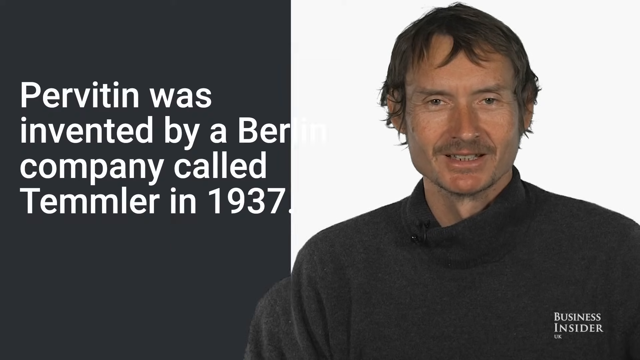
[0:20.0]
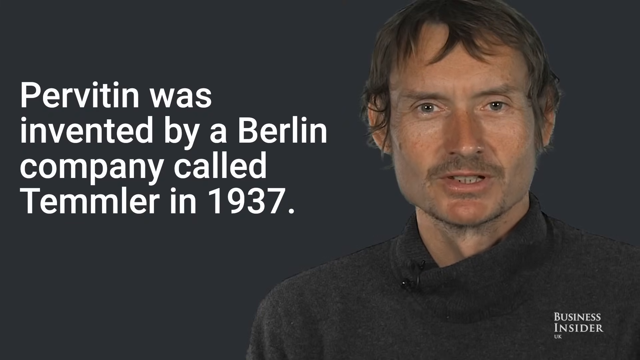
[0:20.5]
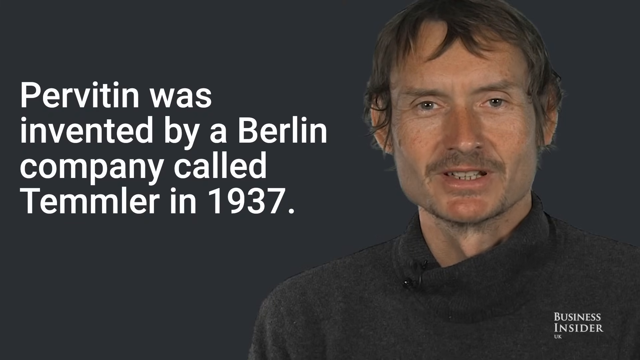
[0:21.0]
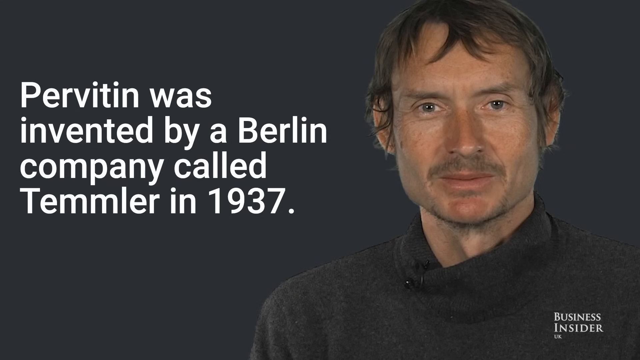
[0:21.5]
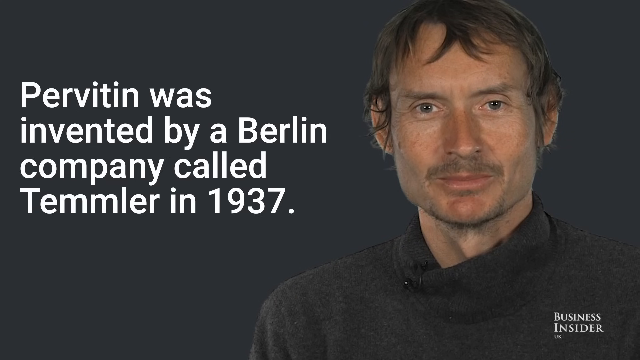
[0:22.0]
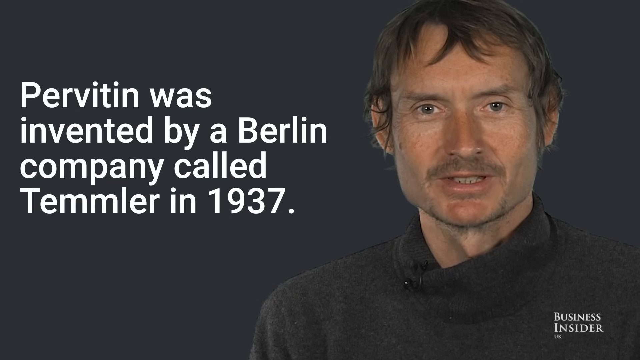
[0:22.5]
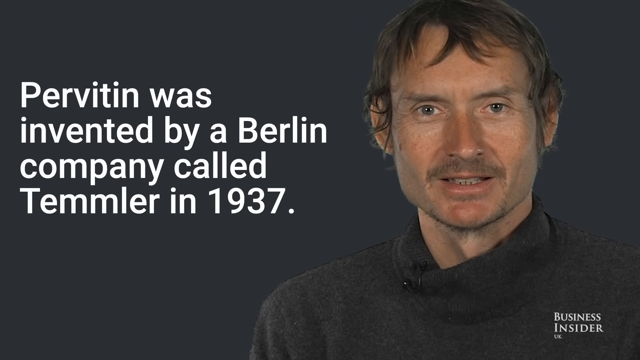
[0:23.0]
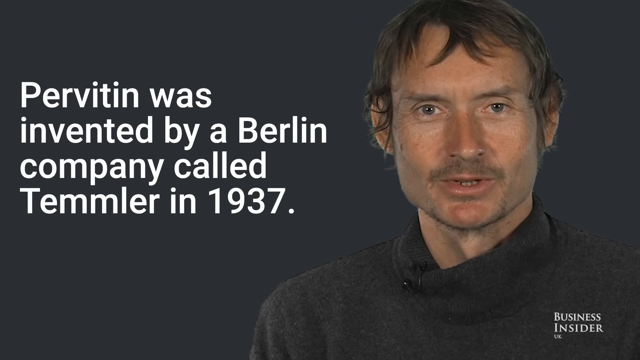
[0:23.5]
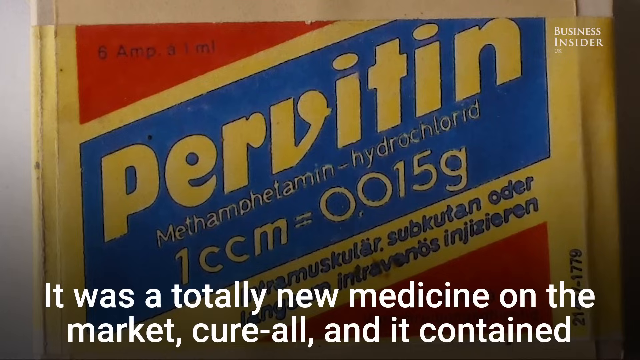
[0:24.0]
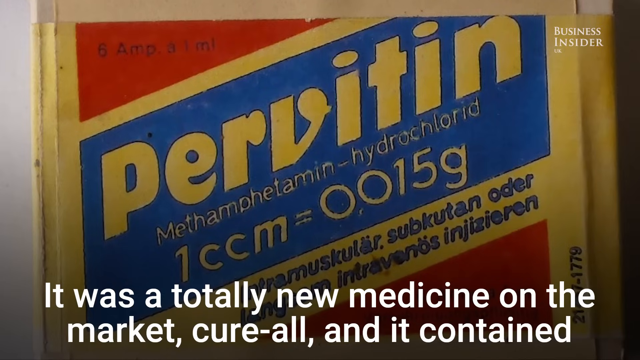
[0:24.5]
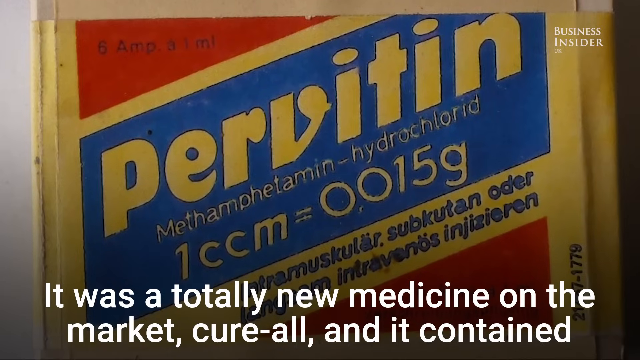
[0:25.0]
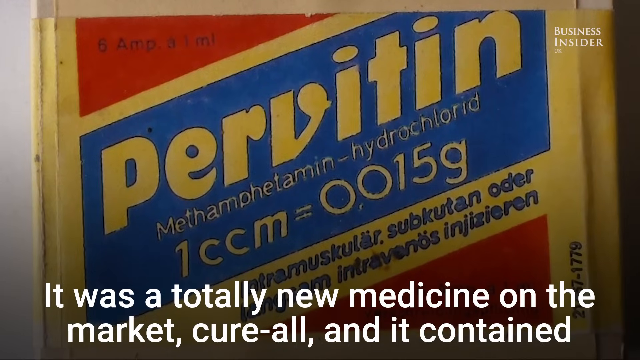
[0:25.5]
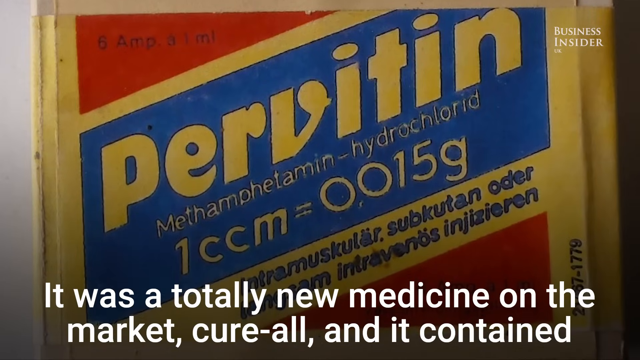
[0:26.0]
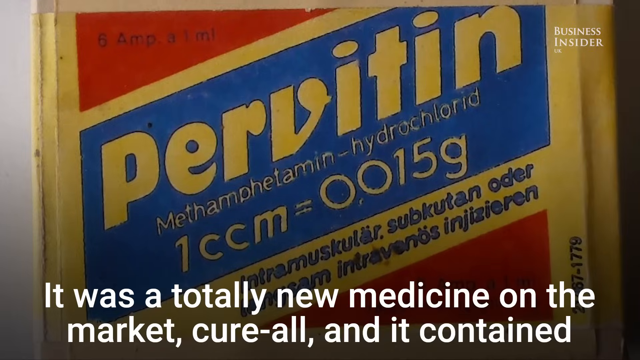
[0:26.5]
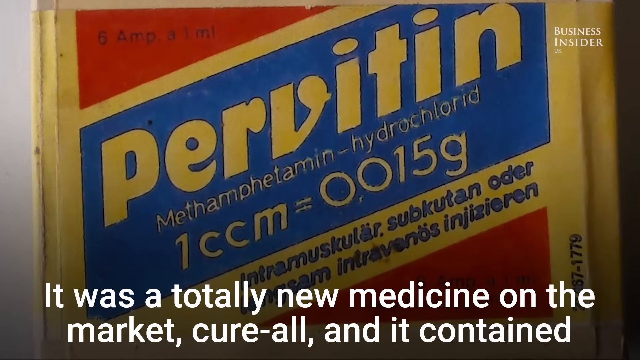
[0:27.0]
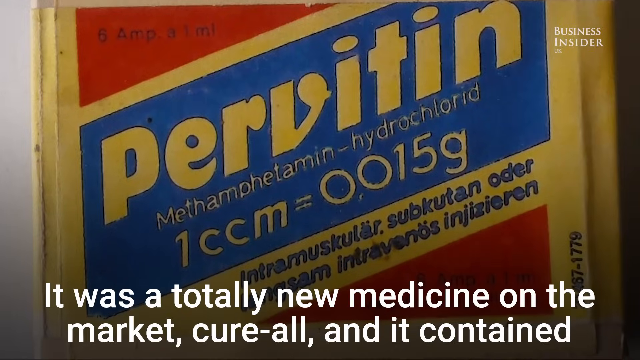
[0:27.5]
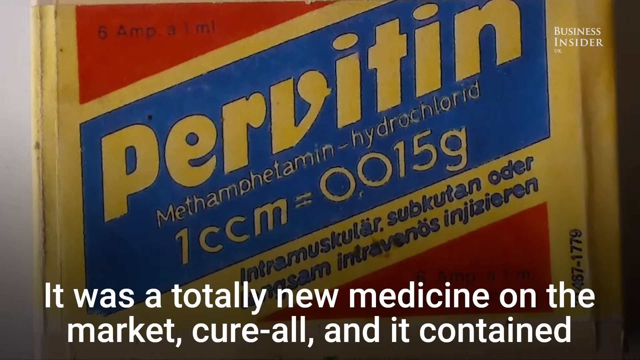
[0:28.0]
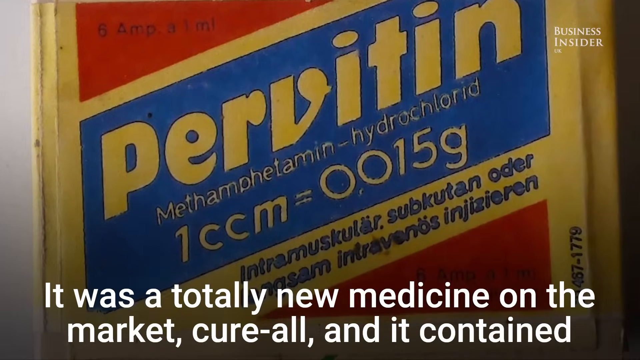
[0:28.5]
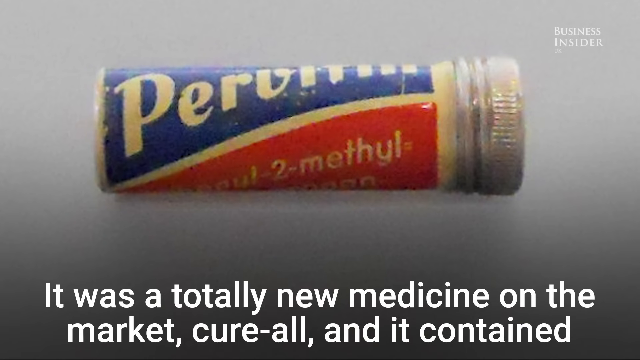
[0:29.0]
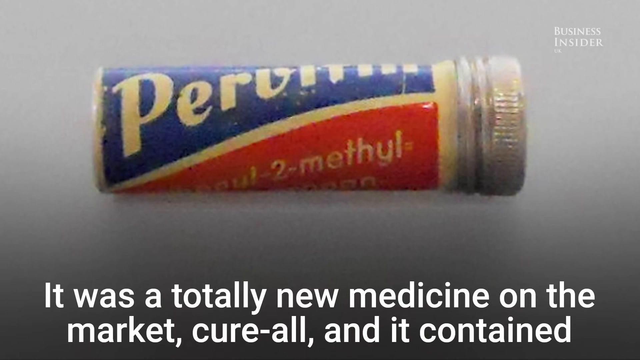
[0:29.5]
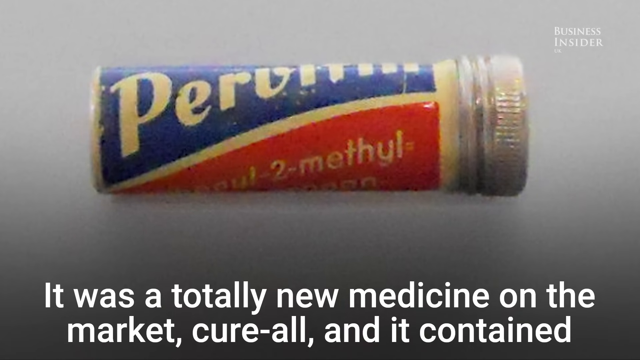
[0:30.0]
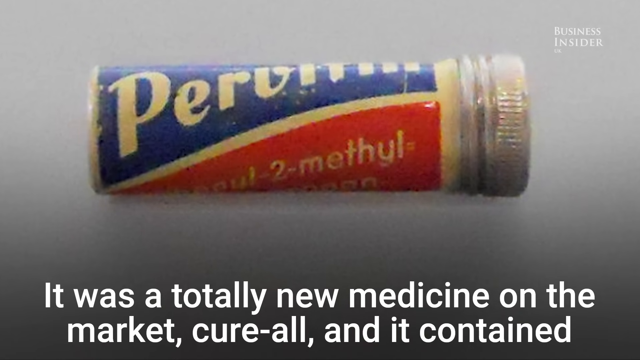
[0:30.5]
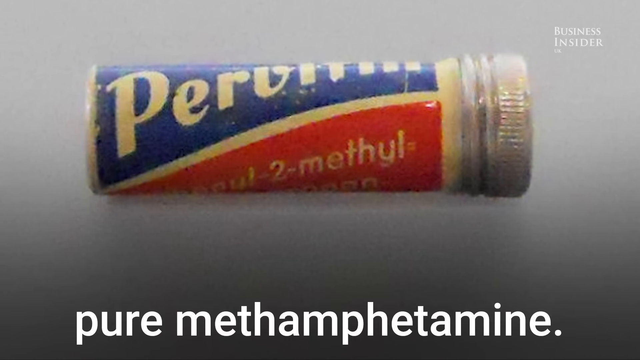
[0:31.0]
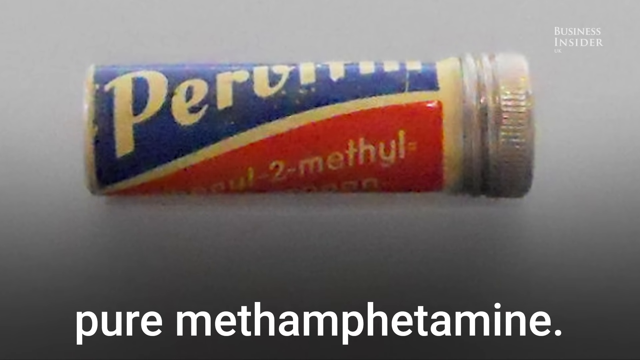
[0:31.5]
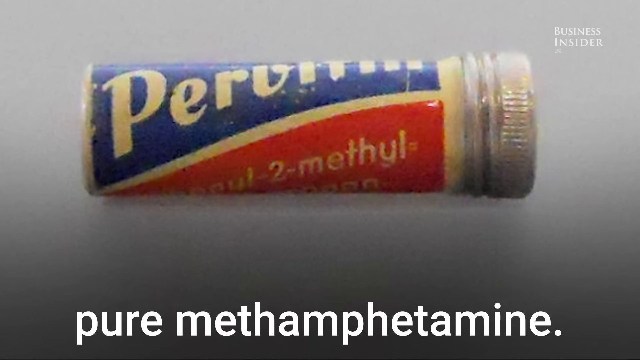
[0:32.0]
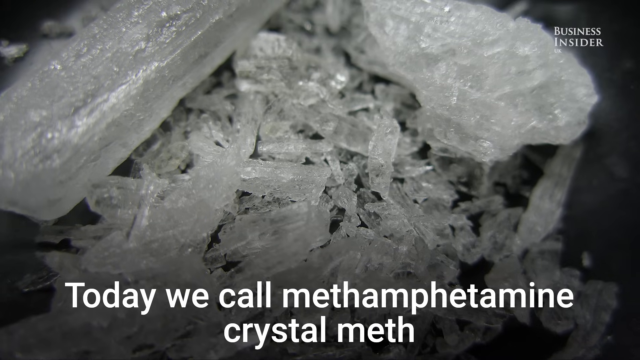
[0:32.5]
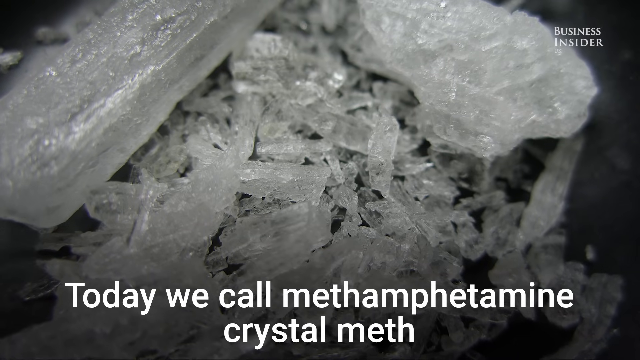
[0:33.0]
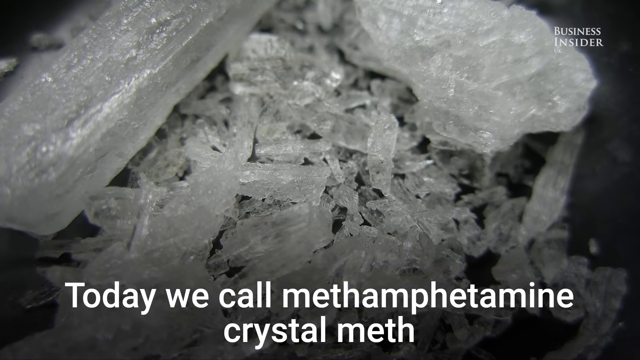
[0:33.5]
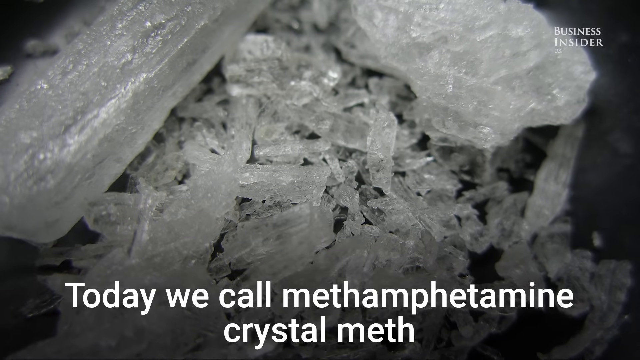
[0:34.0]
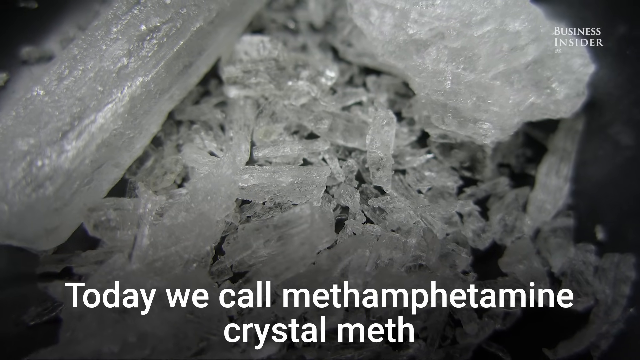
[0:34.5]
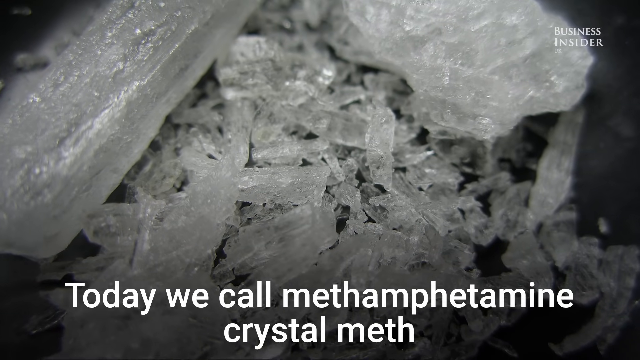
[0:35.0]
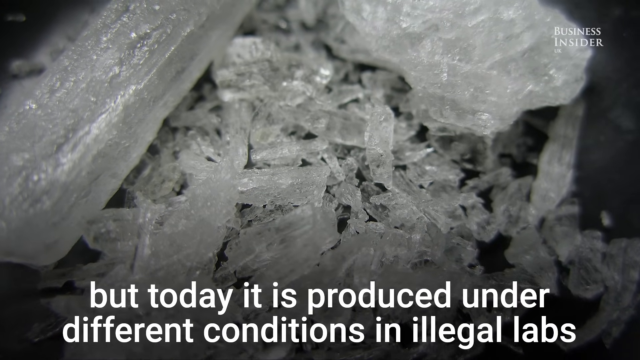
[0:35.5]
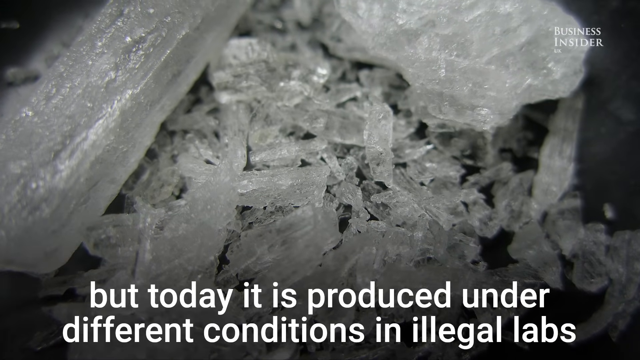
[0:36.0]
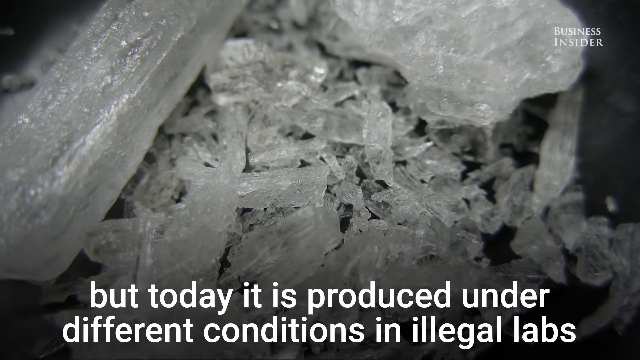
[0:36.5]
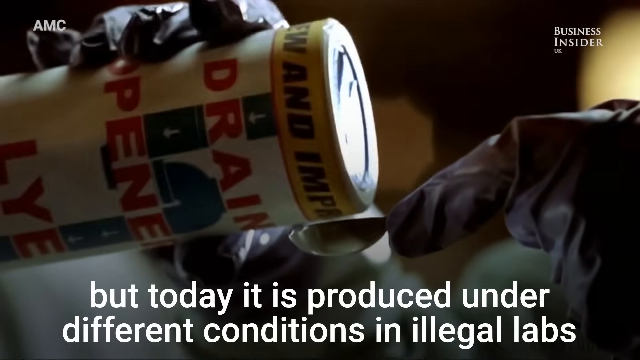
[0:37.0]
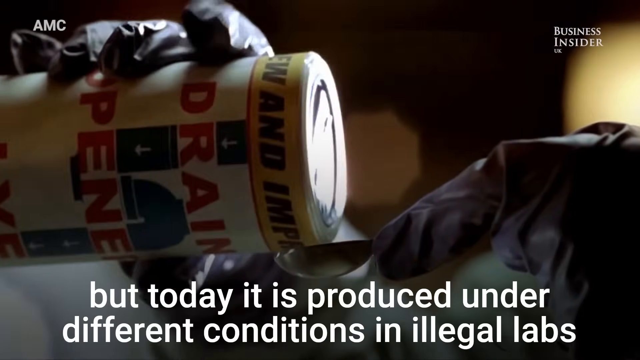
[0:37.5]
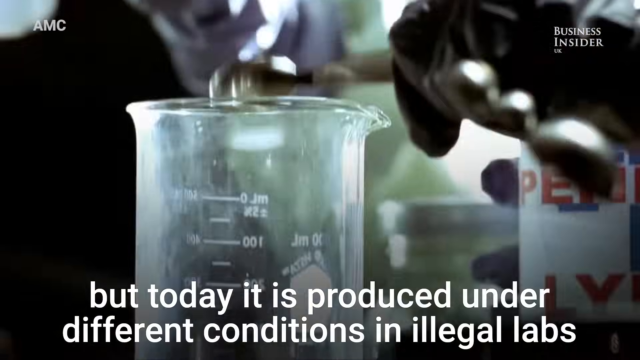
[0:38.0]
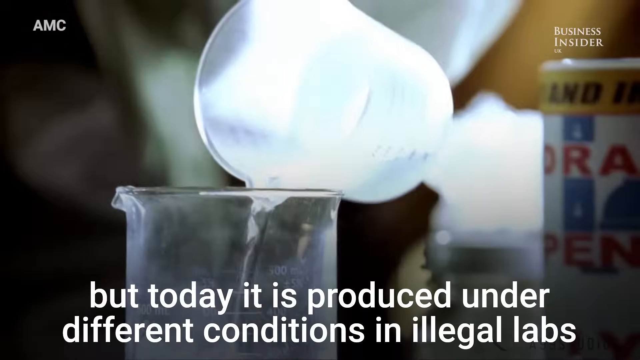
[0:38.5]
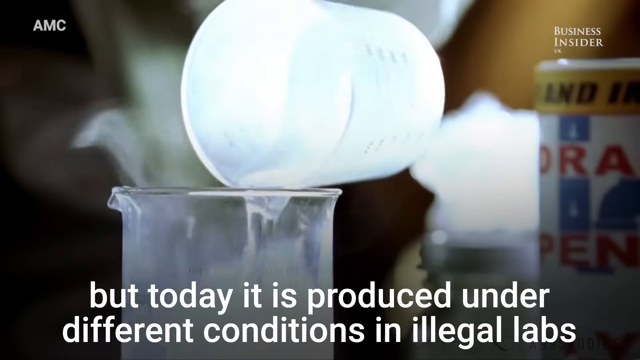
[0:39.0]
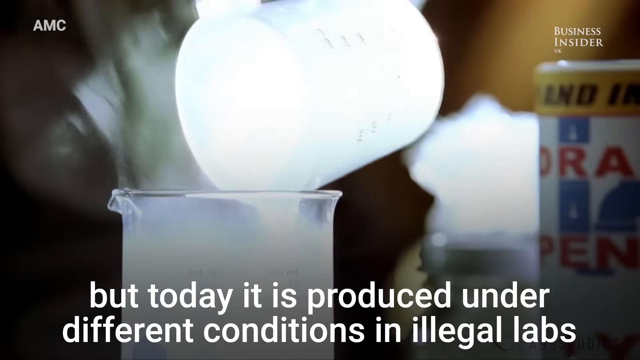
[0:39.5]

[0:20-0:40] The same man appears again. He has very short, straight, sort of grayish-brown hair and sort of bluish-black eyes, and he is on a black background, basically a green screen. Text at the bottom reads "it was a totally new medicine on the market, cure all, and it contained pure methamphetamine. Today we call methamphetamine crystal meth. But today it is produced under different conditions in illegal labs." The video then shows beakers and containers, with people or scientists putting liquids into test tubes and beakers, supposedly to make the meth.